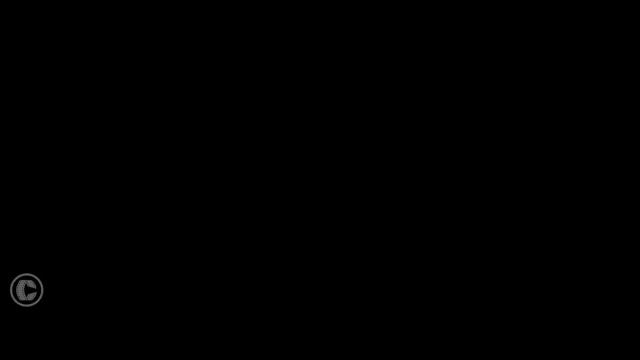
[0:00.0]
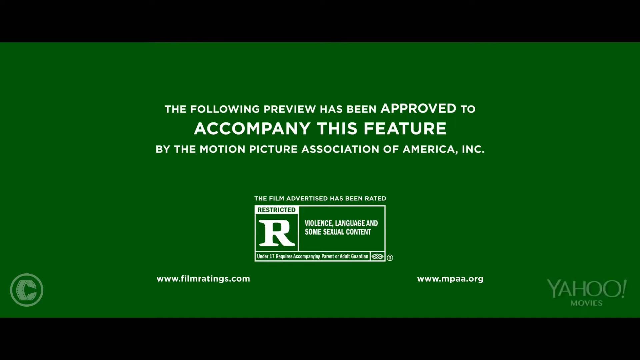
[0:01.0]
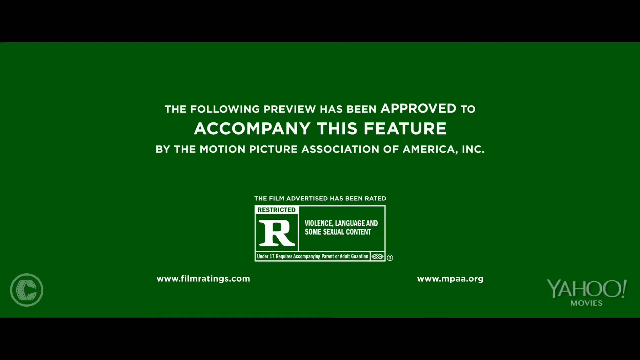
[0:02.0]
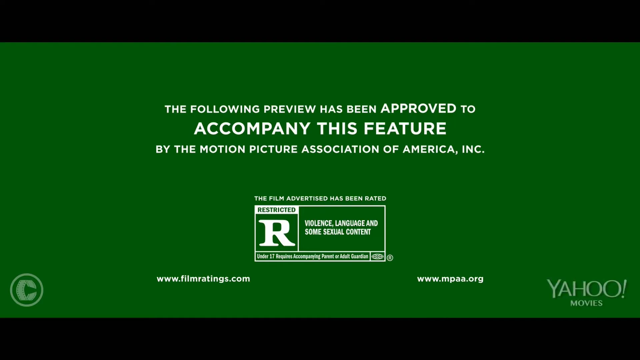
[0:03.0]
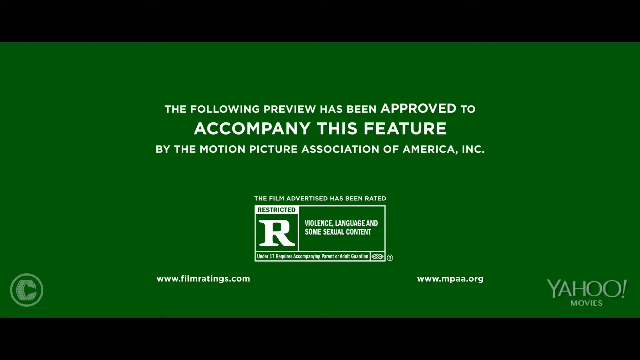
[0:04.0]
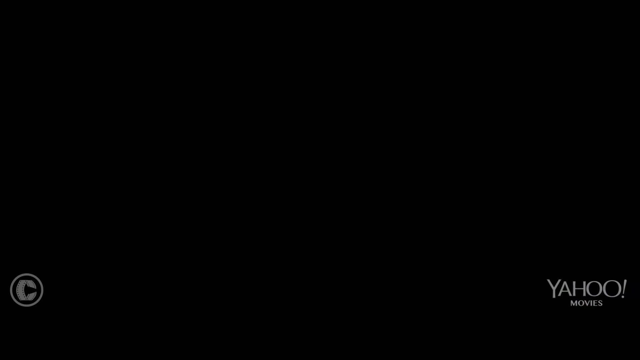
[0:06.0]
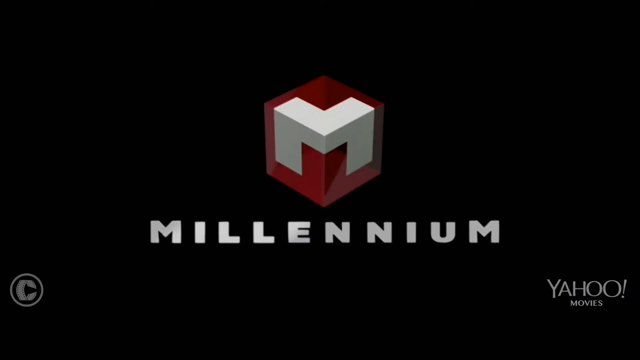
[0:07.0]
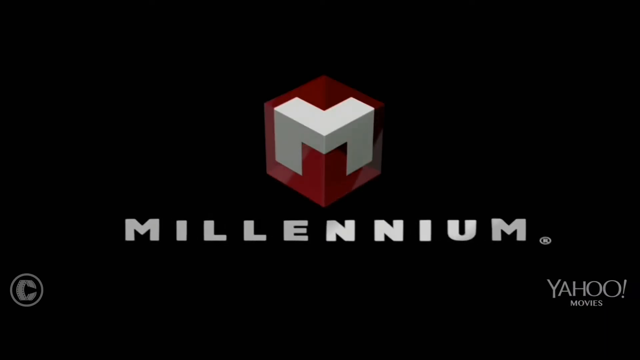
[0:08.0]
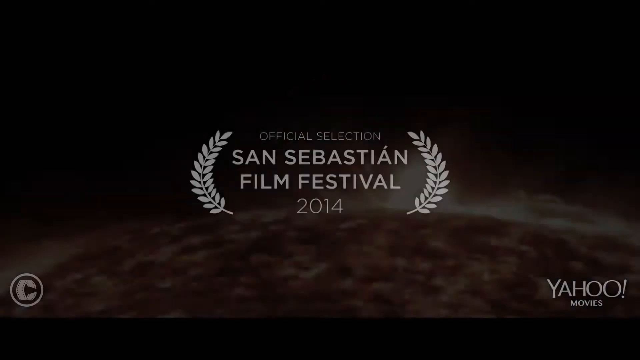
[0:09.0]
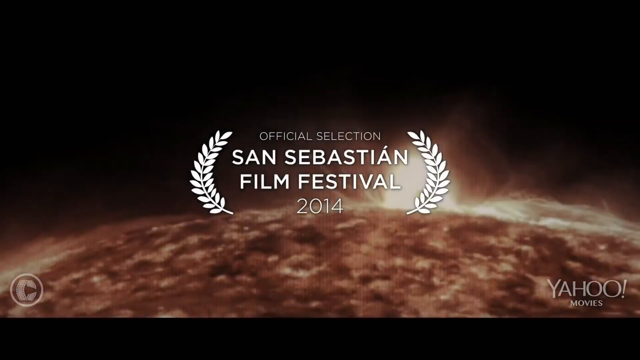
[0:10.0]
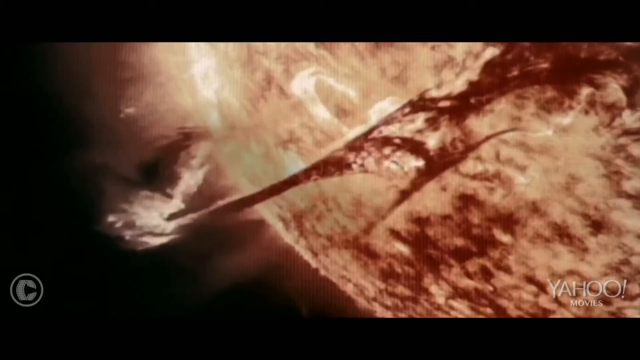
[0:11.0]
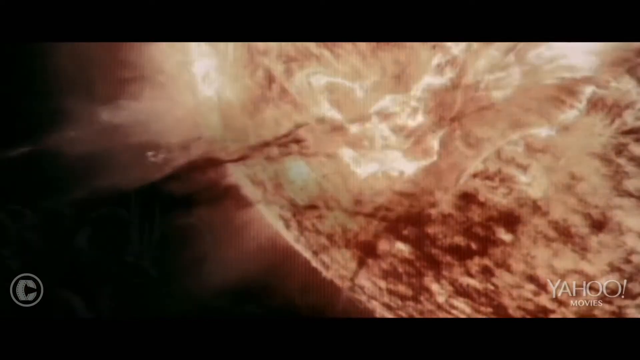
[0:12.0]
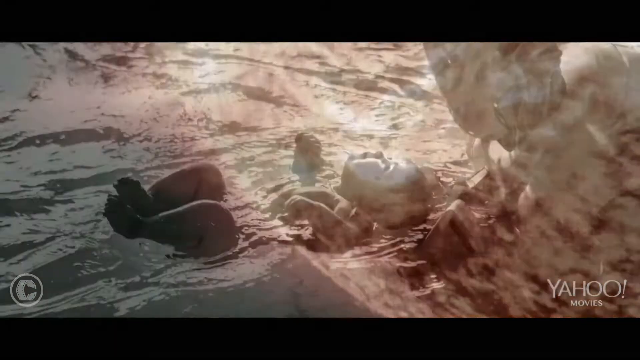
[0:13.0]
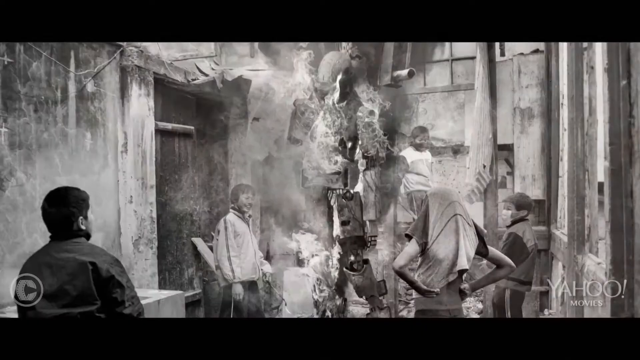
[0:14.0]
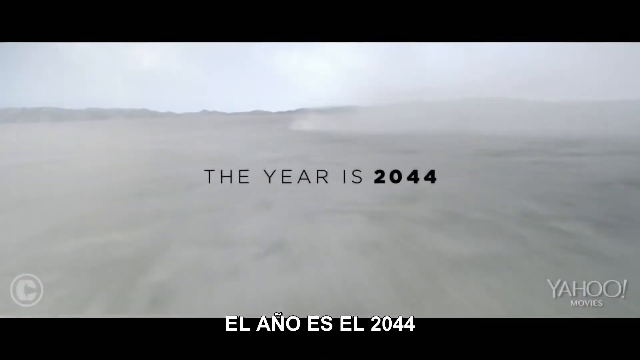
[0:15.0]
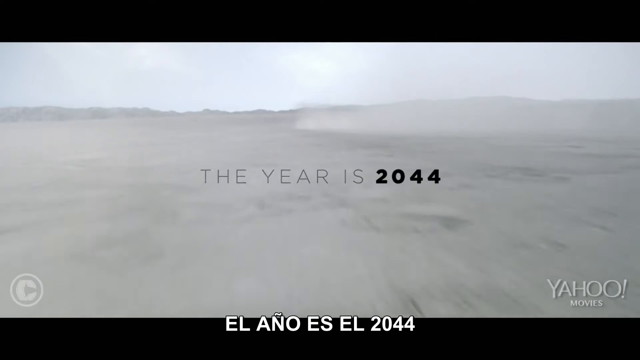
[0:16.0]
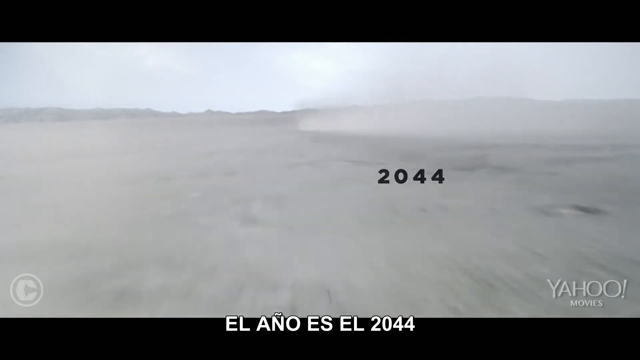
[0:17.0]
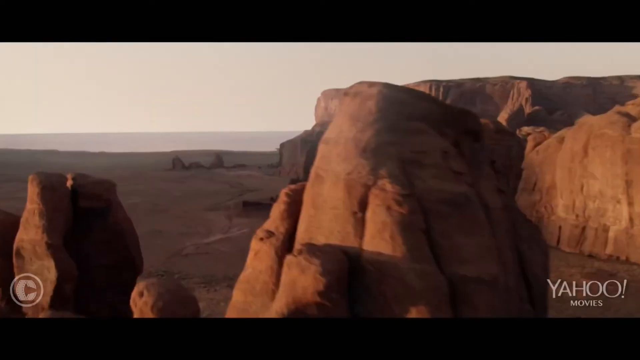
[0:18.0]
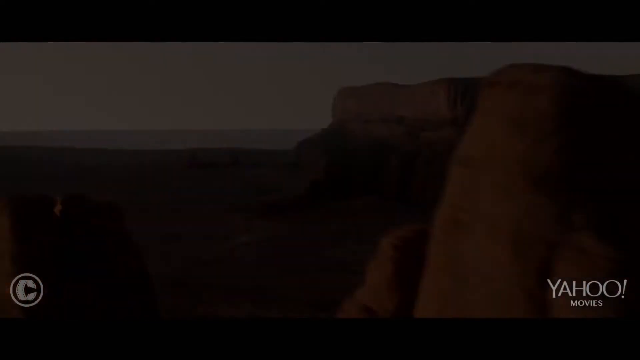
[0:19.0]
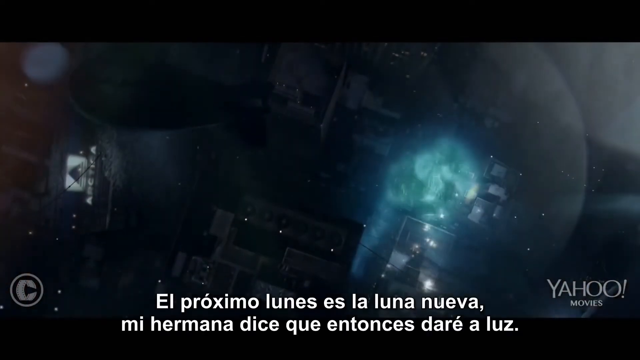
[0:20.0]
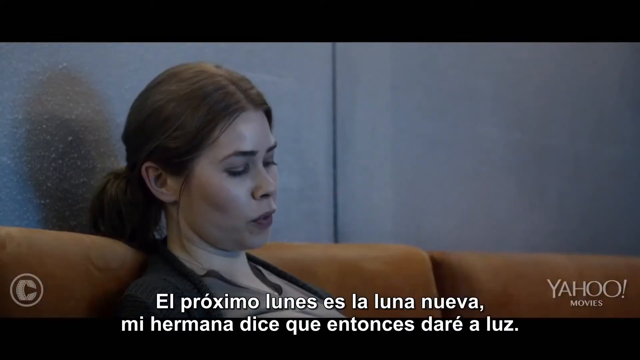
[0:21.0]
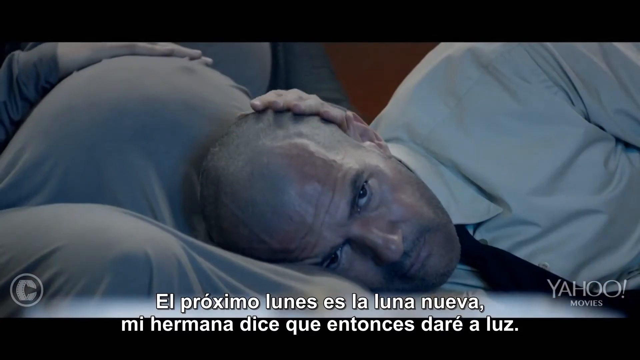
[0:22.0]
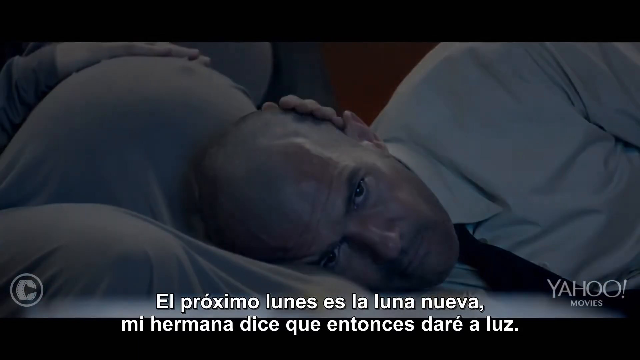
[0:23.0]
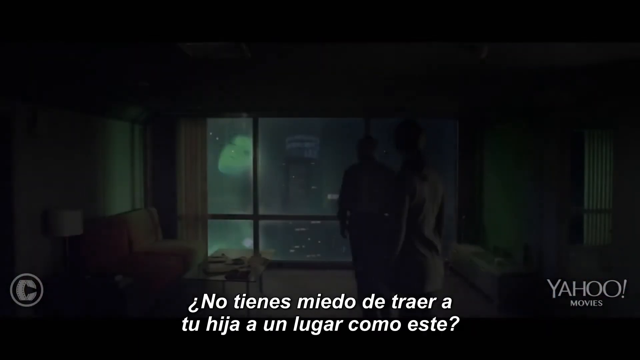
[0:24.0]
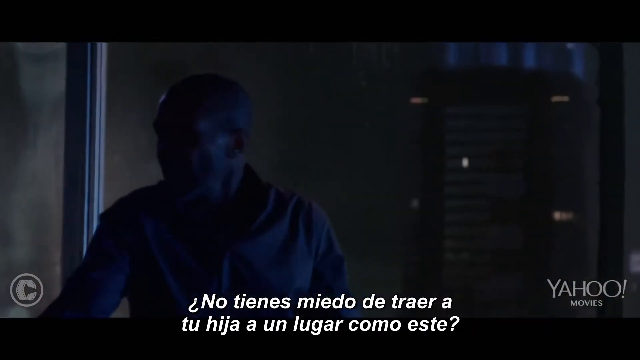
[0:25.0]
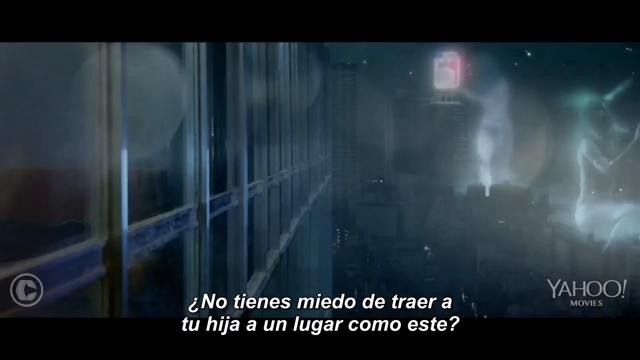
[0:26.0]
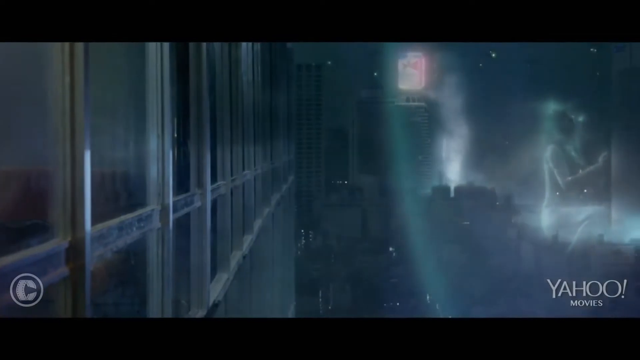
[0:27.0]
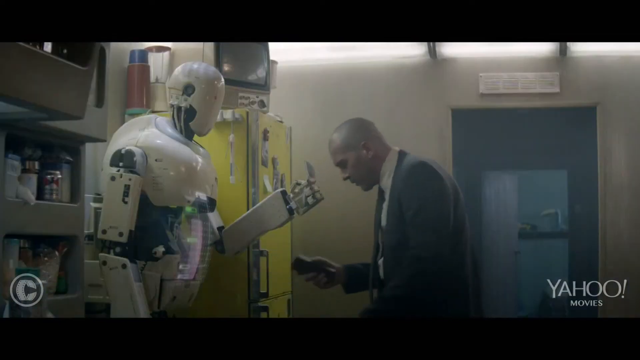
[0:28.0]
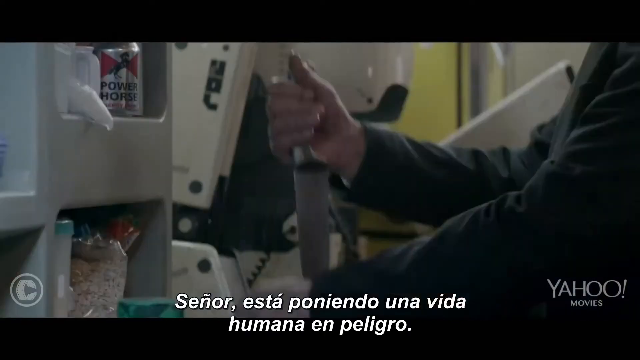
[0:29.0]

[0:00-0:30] The video opens with the usual preview text seen at a movie theater: "The following preview has been approved to accompany this feature by the Motion Picture Association of America Incorporated." The film is rated R for violence, language and some sexual contact, and the website www.mpaa.org is listed. Yahoo! Movies is shown as the provider of the trailer. Next, Millennium appears as the studio, followed by an official selection notice from the 2014 San Sebastian Film Festival. Some pictures follow, then the story jumps forward to 2044, when the movie takes place. The subtitles are in Spanish. There are many scenic pictures of space and of other work going on. The subtitle text reads "next Monday is the new moon," apparently spoken by the character's sister. Someone then asks whether they are not afraid of bringing their daughter to a place like this. The setting looks very futuristic, with robots.